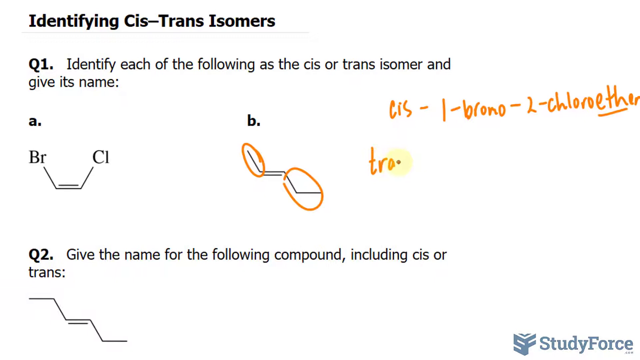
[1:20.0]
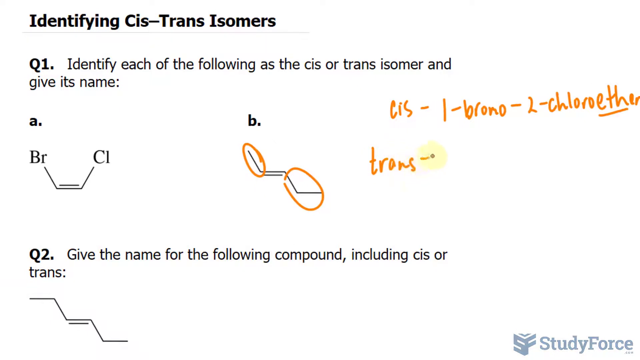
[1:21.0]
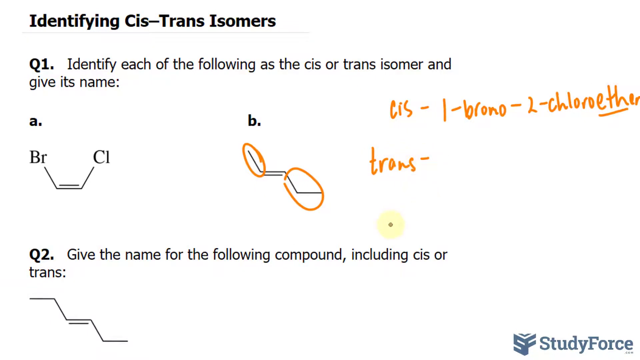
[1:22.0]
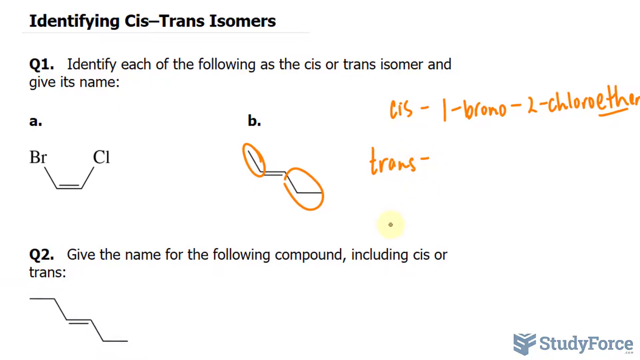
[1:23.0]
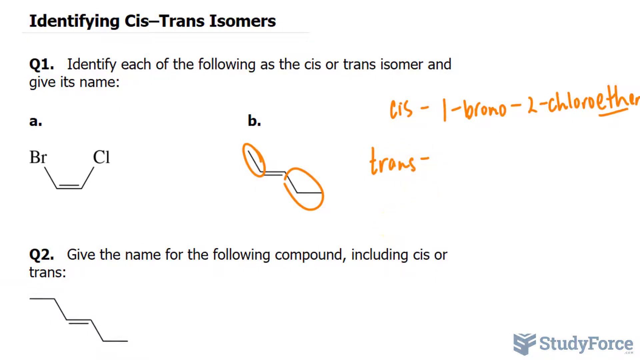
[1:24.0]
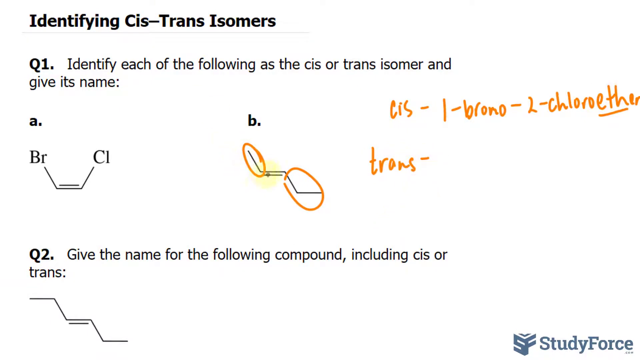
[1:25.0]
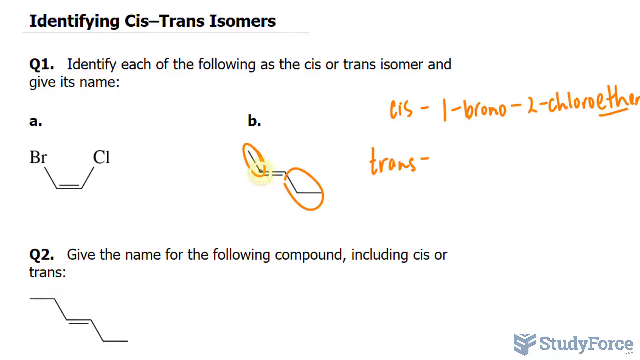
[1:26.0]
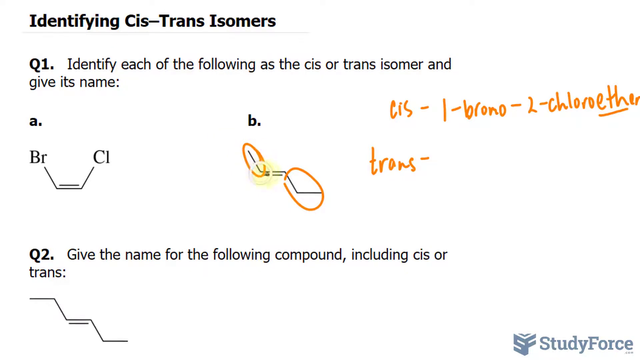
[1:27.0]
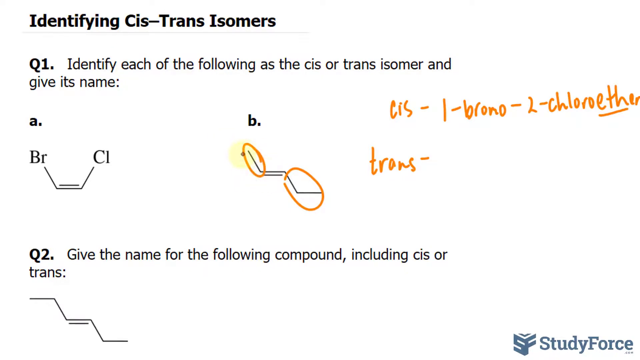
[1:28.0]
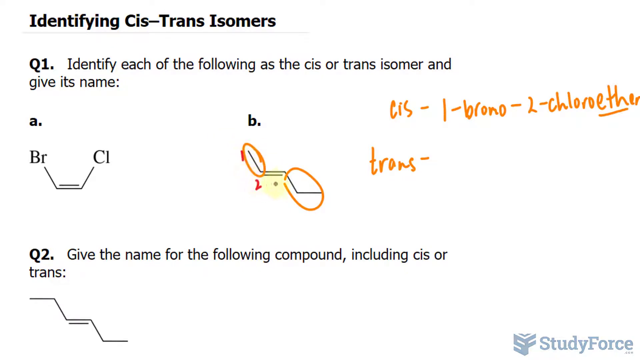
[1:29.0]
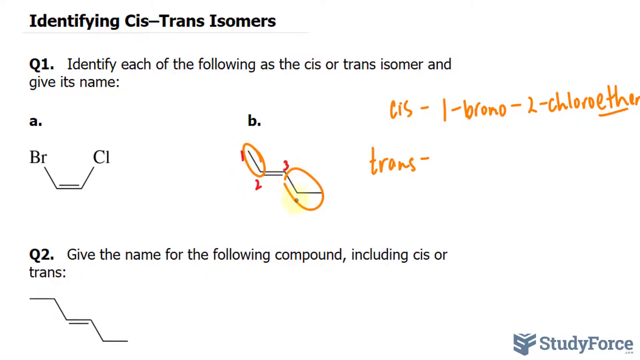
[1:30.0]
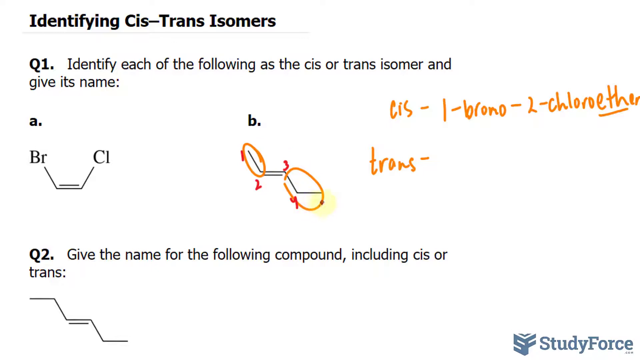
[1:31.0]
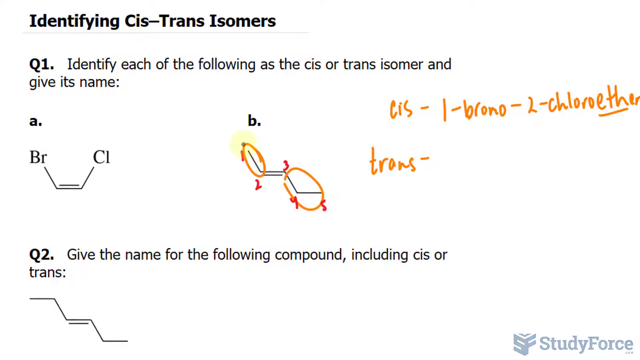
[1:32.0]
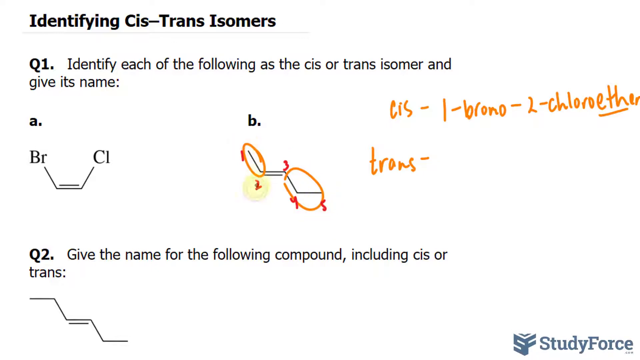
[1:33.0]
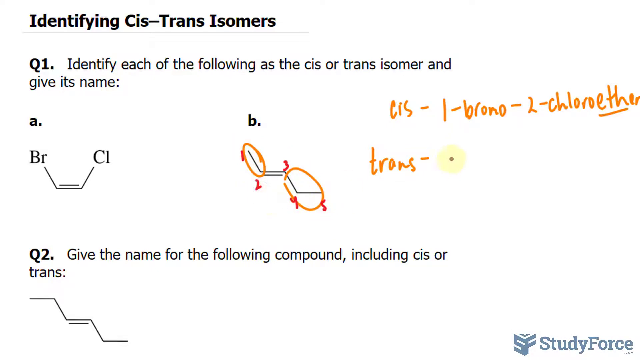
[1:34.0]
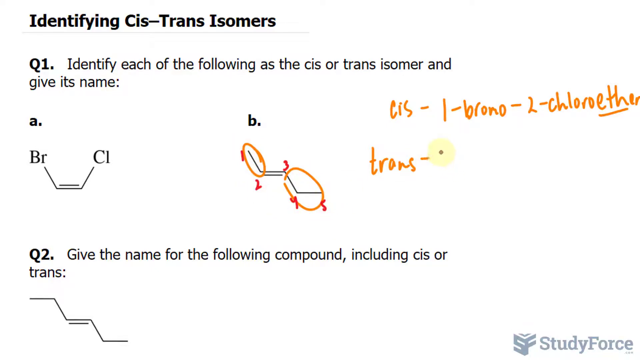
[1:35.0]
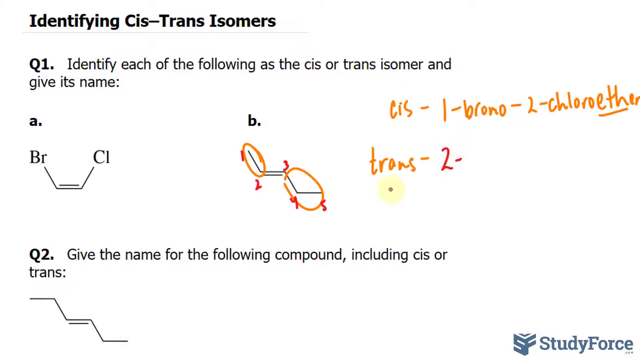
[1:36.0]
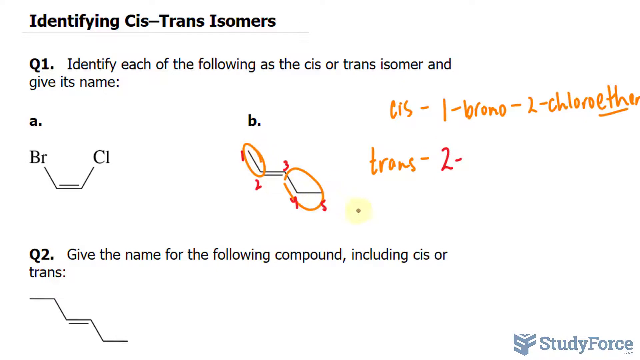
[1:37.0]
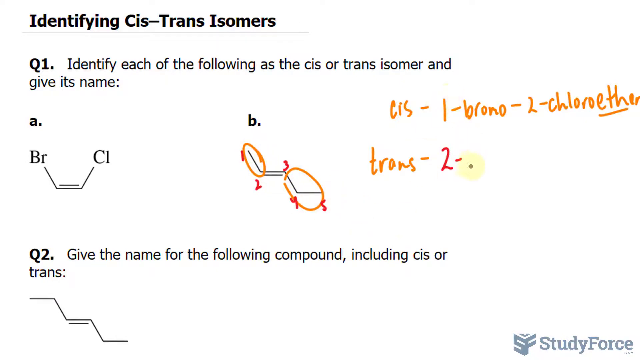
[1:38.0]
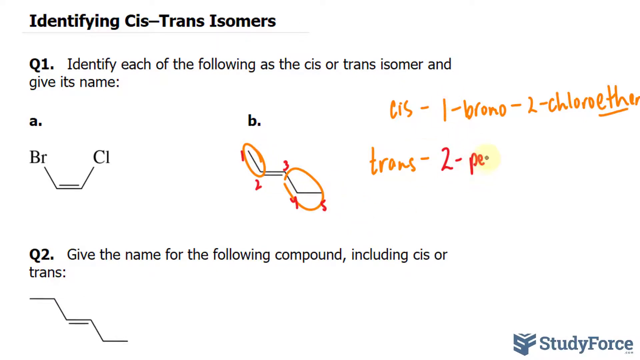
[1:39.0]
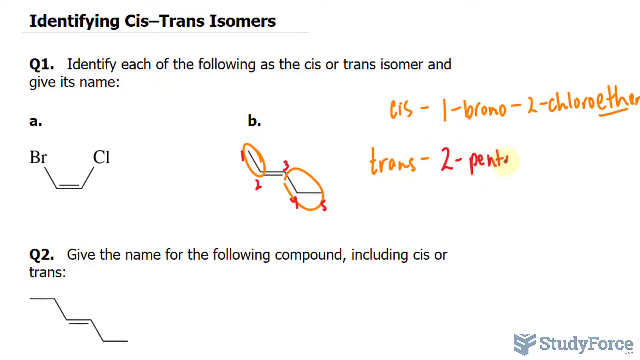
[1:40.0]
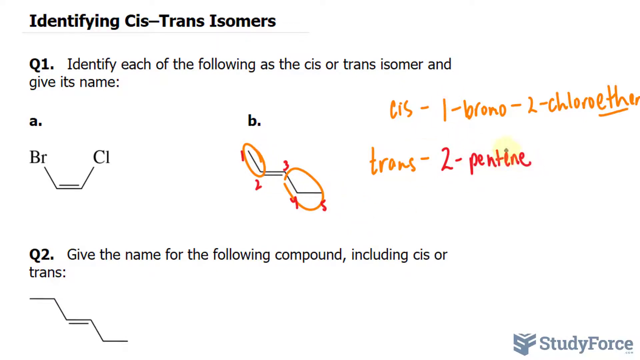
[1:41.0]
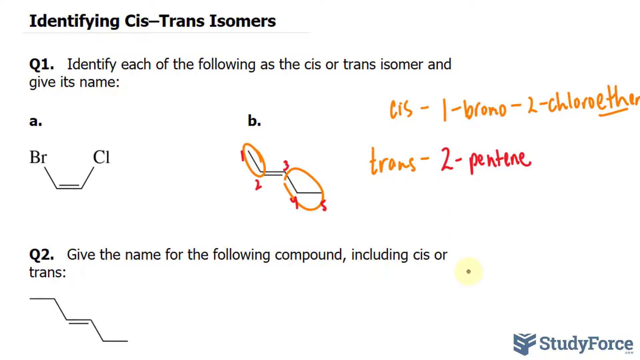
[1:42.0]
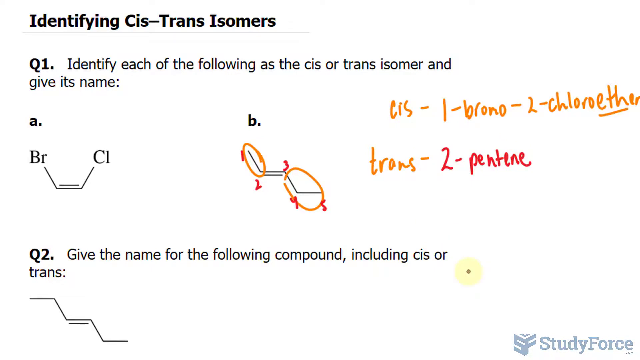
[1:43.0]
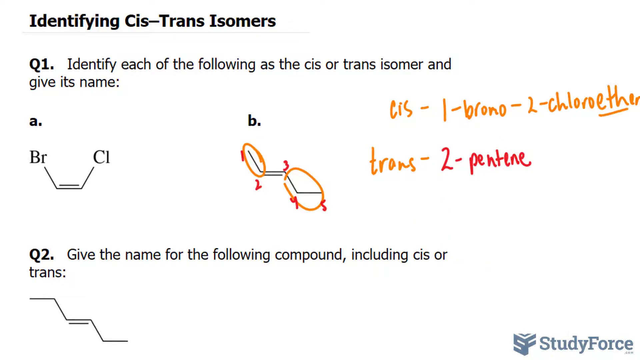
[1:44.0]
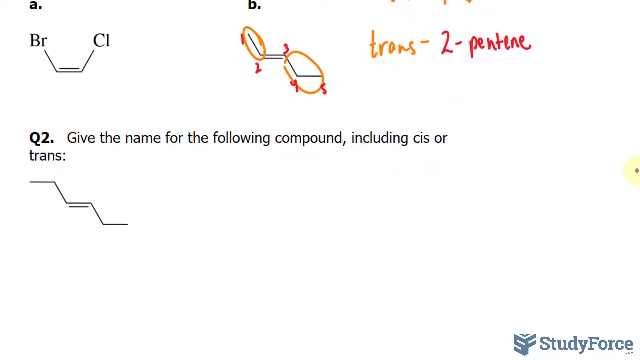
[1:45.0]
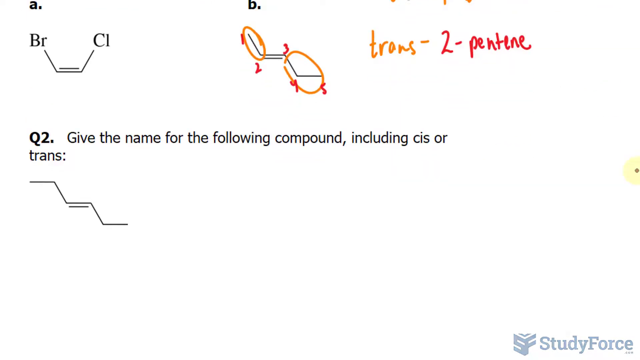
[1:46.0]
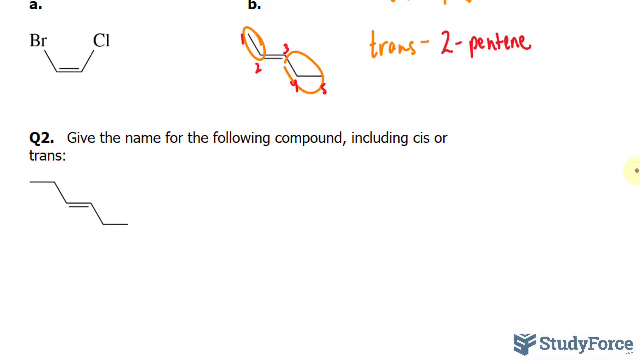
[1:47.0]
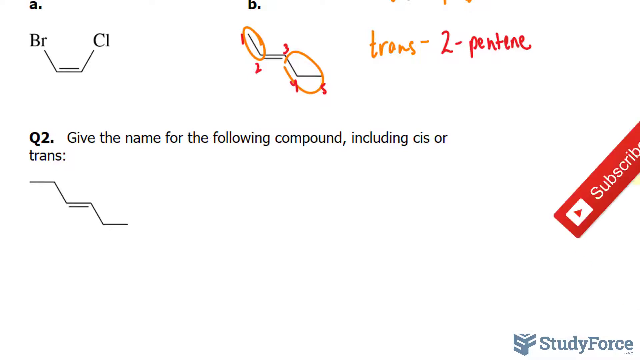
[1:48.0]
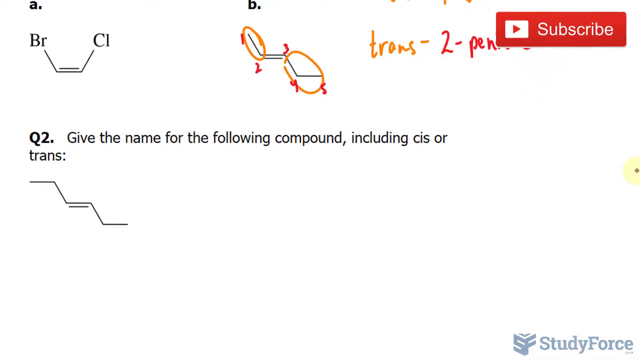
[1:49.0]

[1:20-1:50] The cursor, made up of a very small central circle and a slightly larger yellow concentric circle, moves rather fluidly on the screen and circles two portions of the molecule corresponding to the letter B: the portion at the top left and the portion at the bottom right. After moving along some sections of the molecule, the cursor writes the numbers 1 to 5 in red around it, at specific points of the molecule. Then the cursor moves to the right and adds to the name of the molecule, writing in red the number 2 and the word "pentene", separated by a red line. In the last seconds, a small red banner with the text "Subscribe" appears at the top right of the screen.